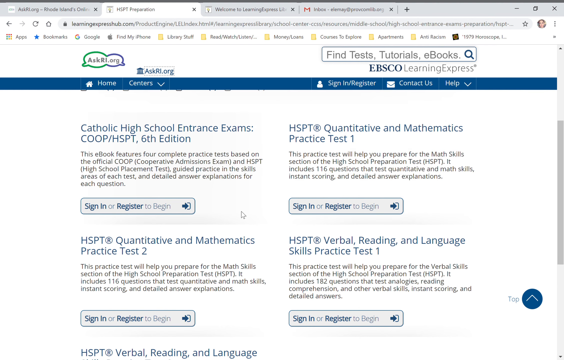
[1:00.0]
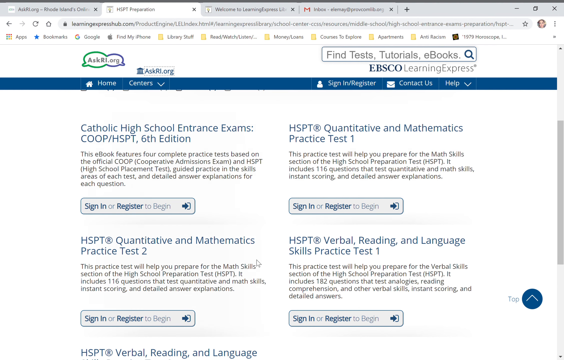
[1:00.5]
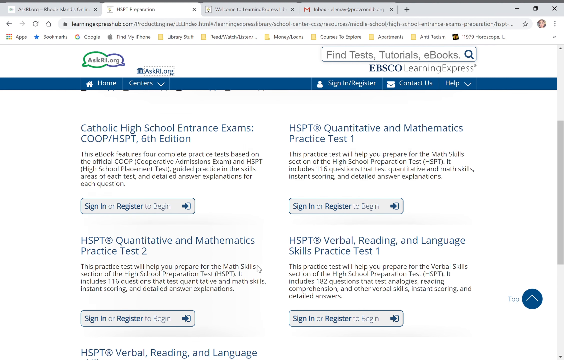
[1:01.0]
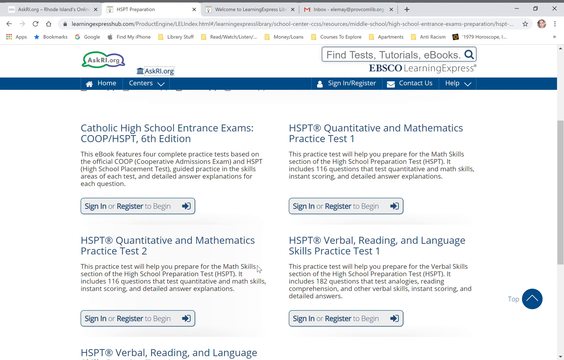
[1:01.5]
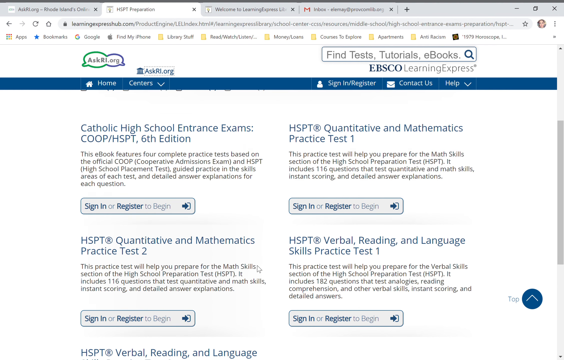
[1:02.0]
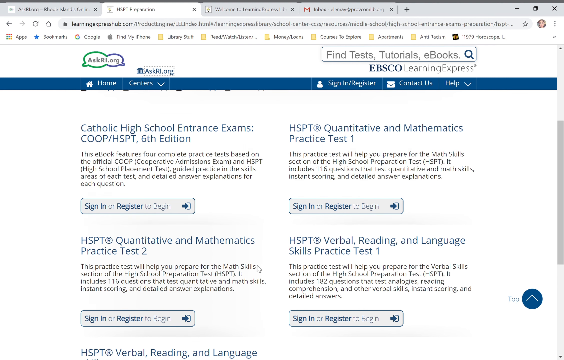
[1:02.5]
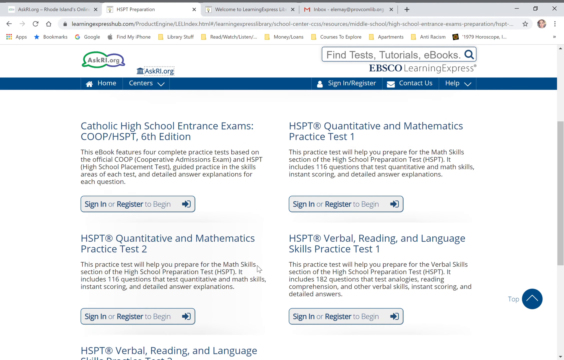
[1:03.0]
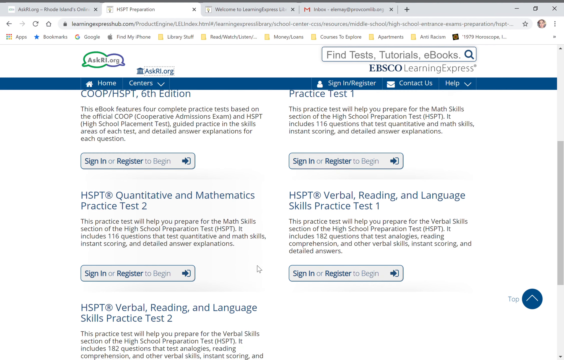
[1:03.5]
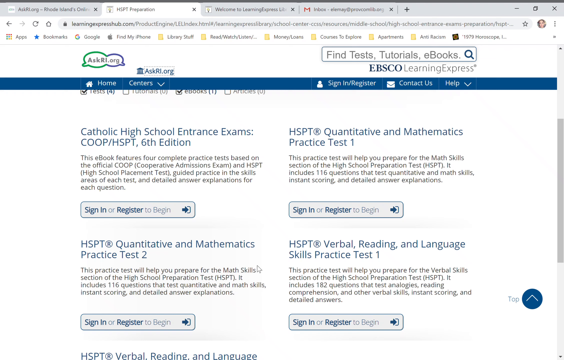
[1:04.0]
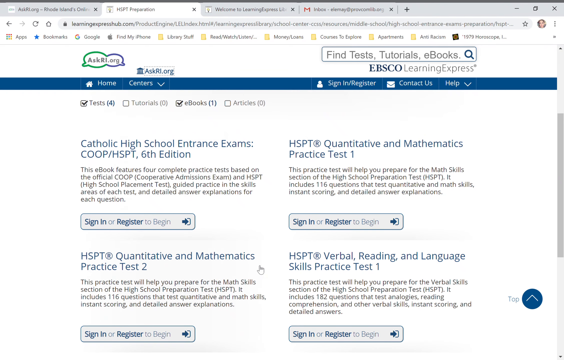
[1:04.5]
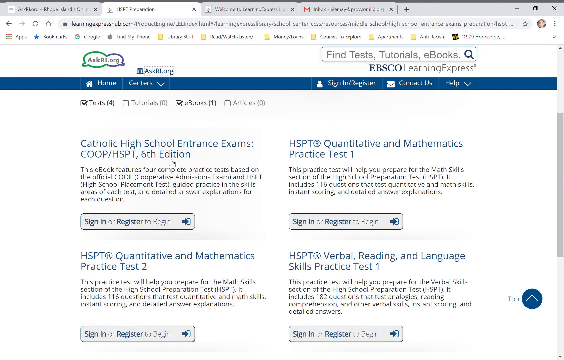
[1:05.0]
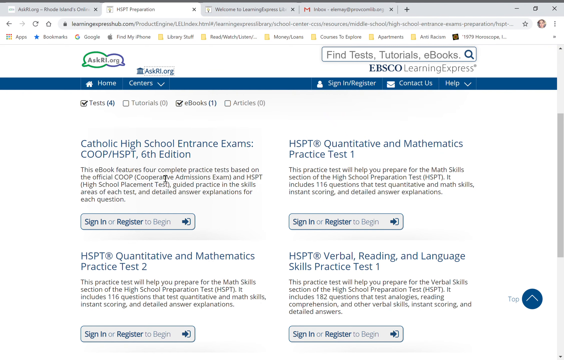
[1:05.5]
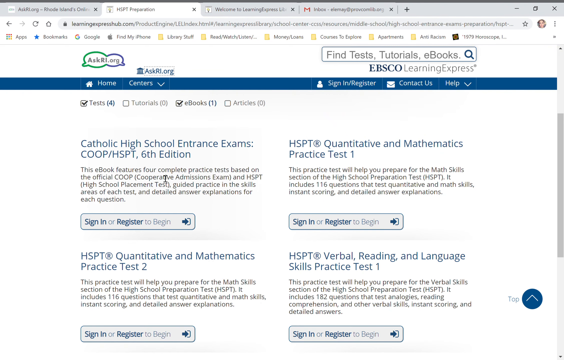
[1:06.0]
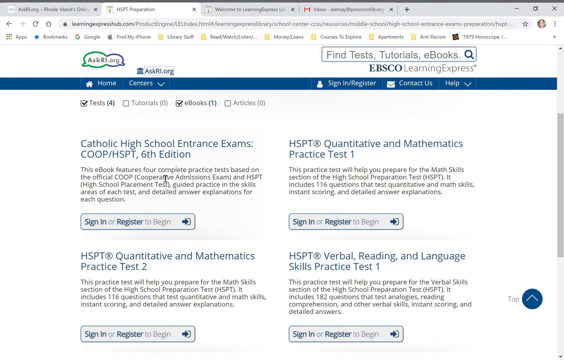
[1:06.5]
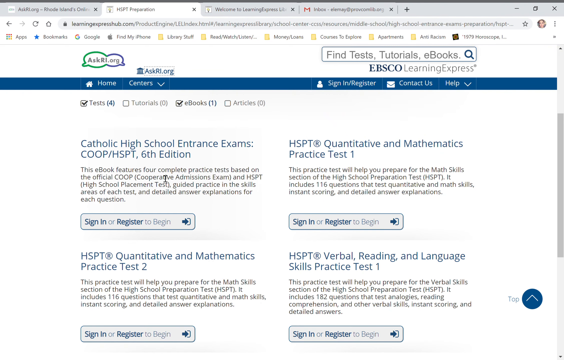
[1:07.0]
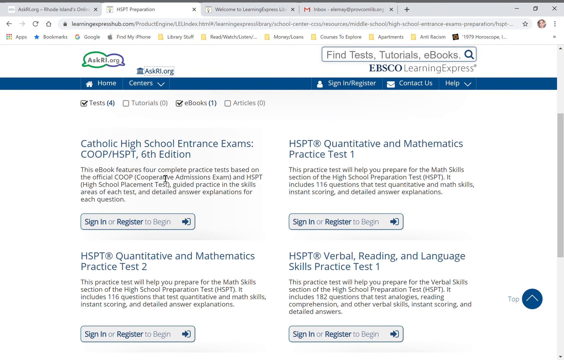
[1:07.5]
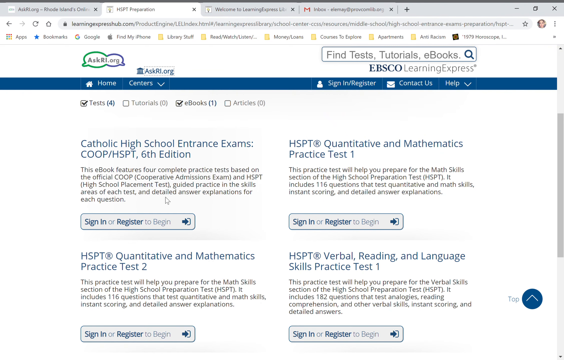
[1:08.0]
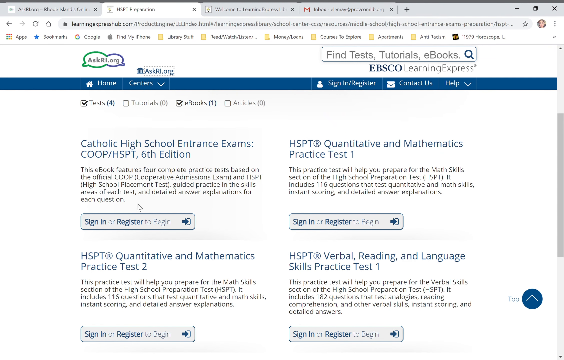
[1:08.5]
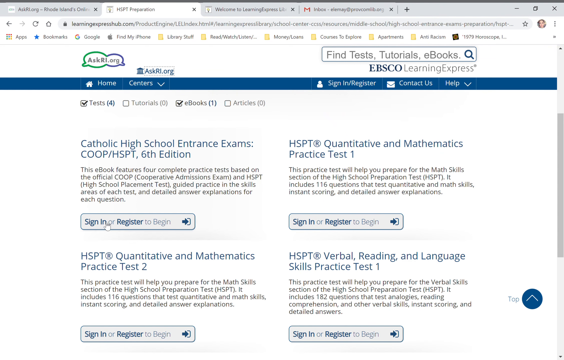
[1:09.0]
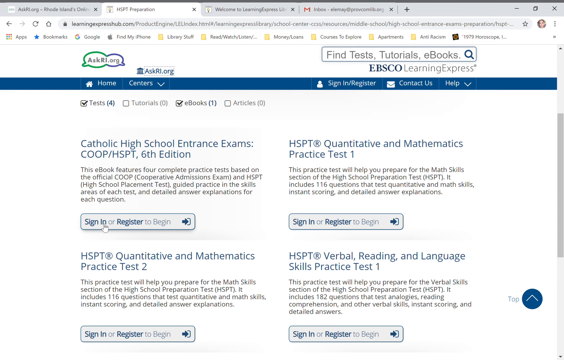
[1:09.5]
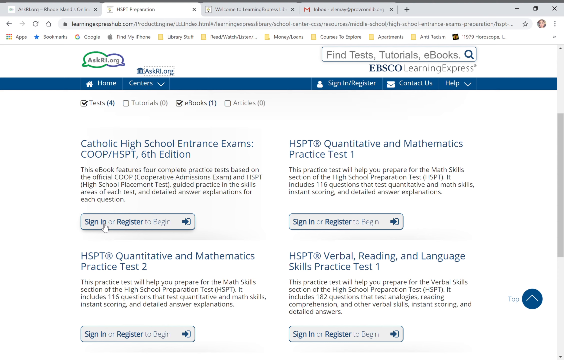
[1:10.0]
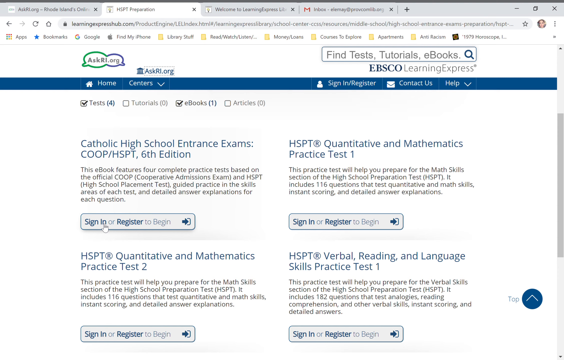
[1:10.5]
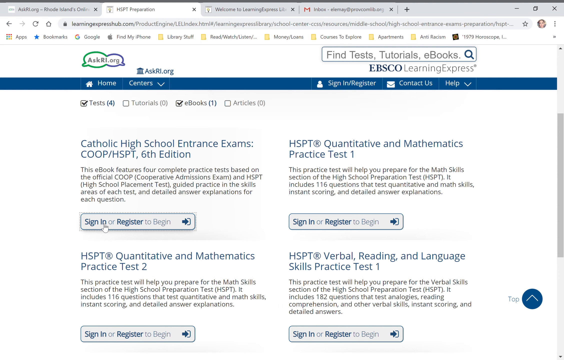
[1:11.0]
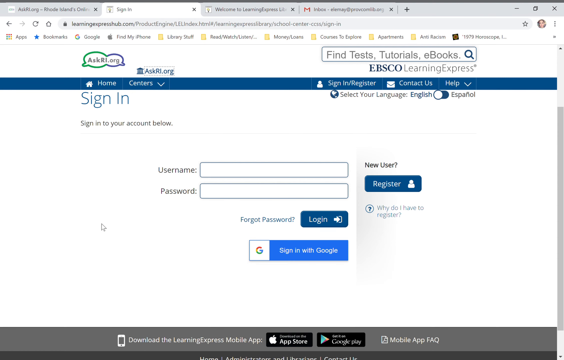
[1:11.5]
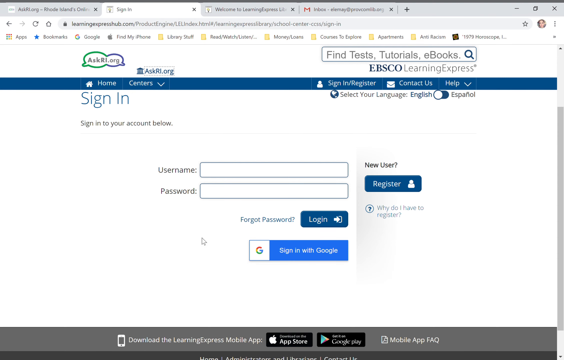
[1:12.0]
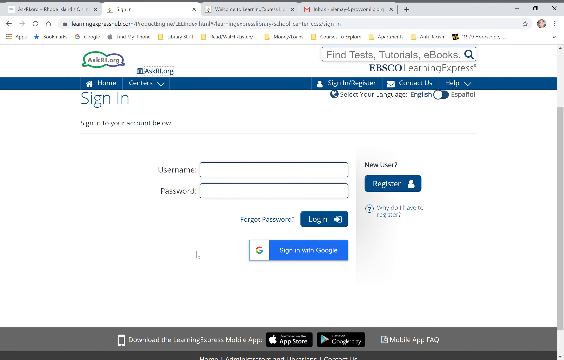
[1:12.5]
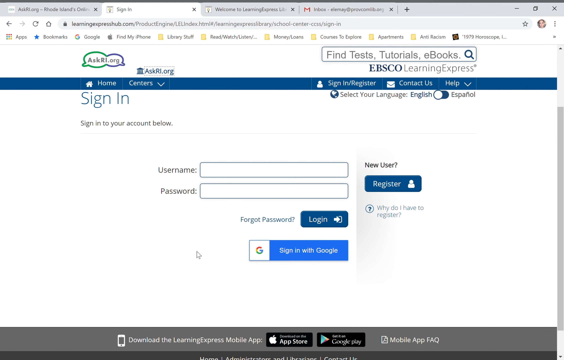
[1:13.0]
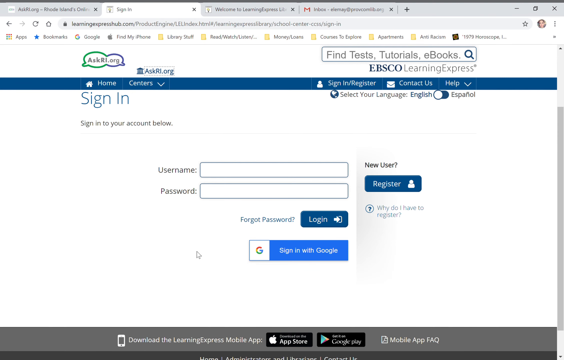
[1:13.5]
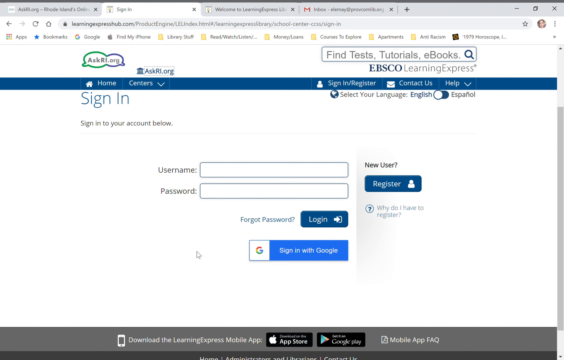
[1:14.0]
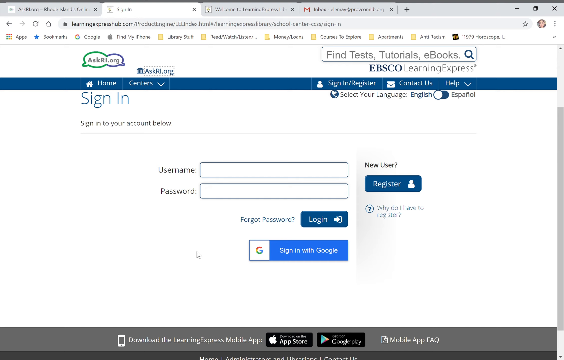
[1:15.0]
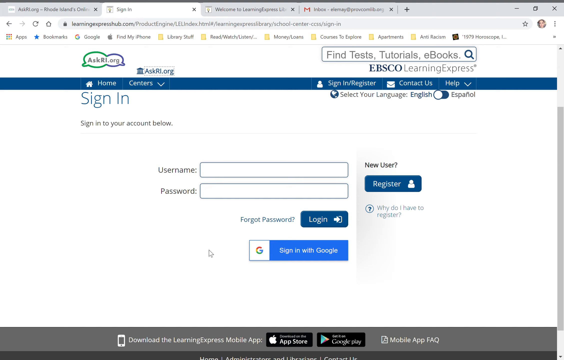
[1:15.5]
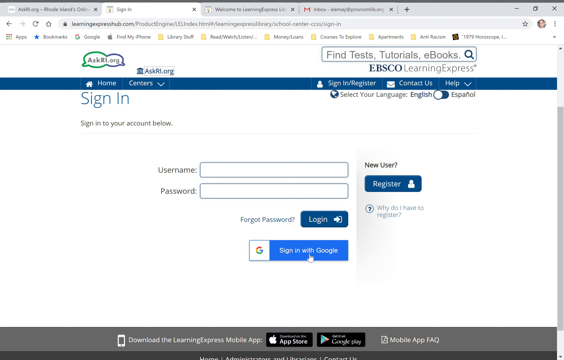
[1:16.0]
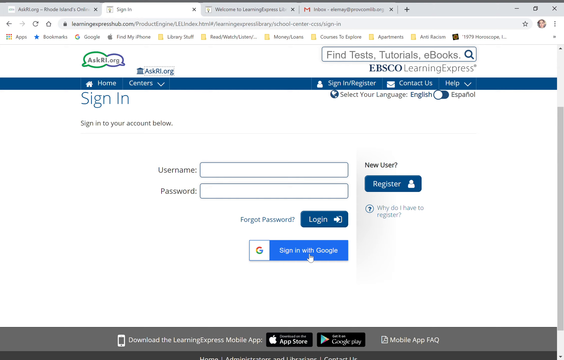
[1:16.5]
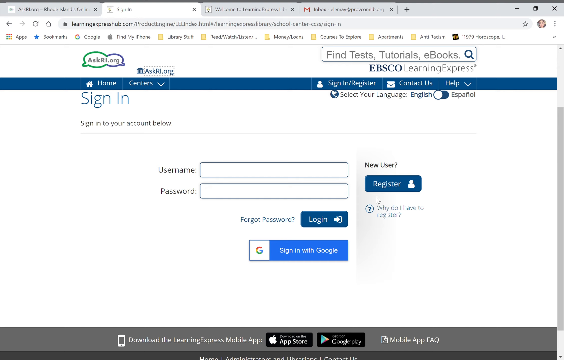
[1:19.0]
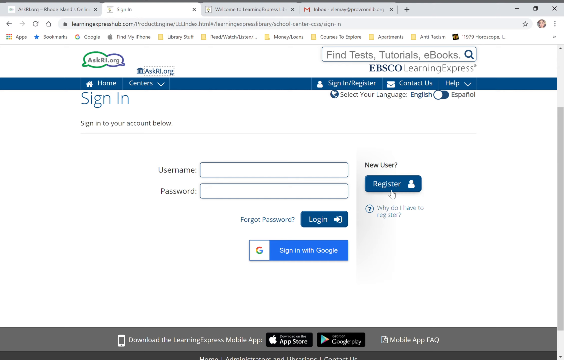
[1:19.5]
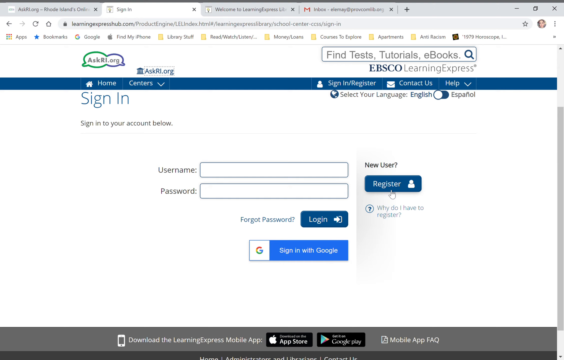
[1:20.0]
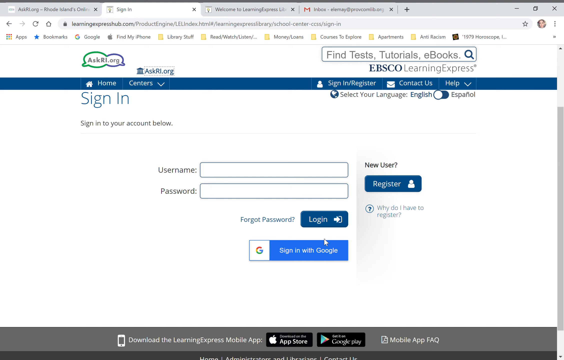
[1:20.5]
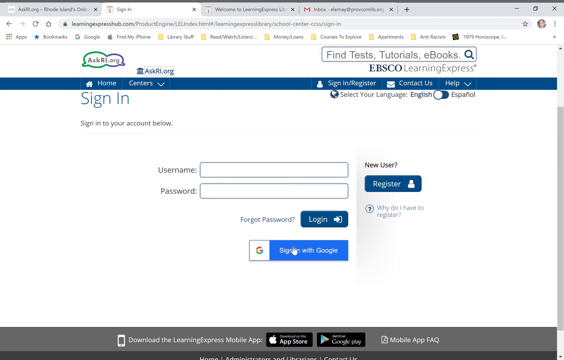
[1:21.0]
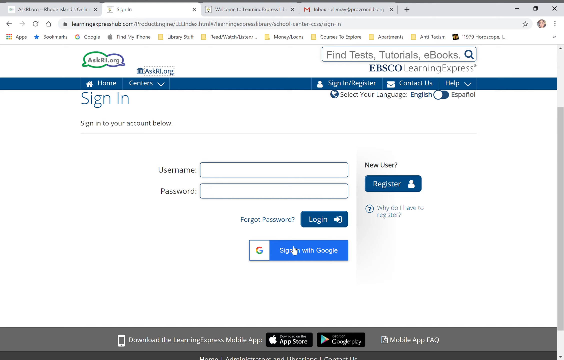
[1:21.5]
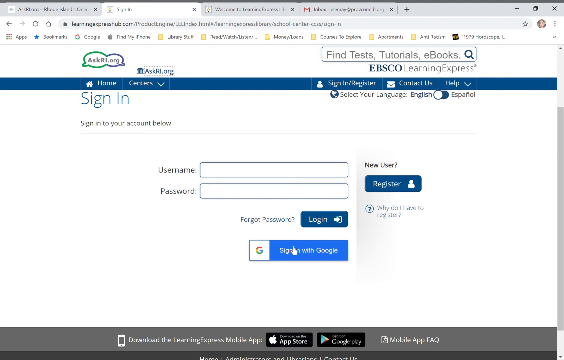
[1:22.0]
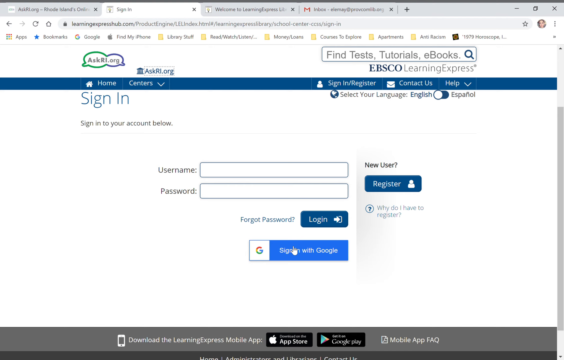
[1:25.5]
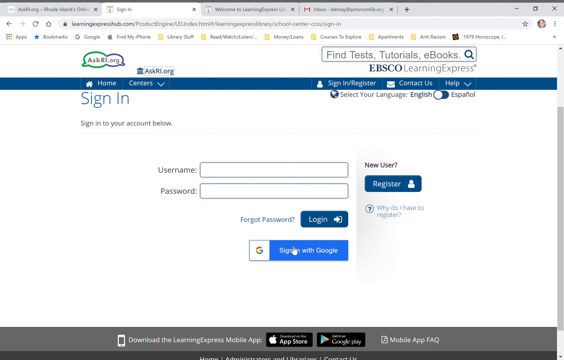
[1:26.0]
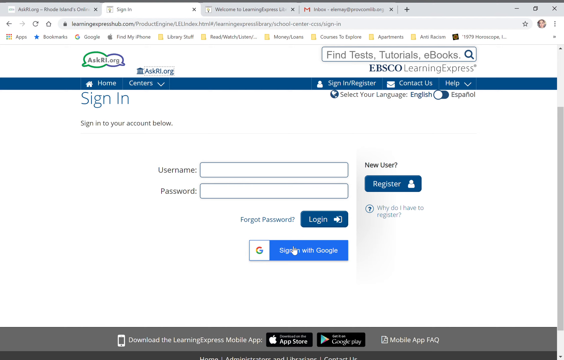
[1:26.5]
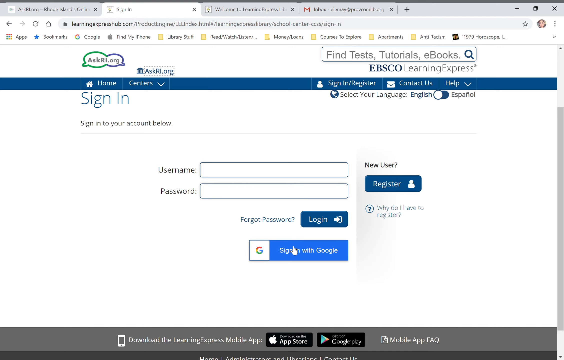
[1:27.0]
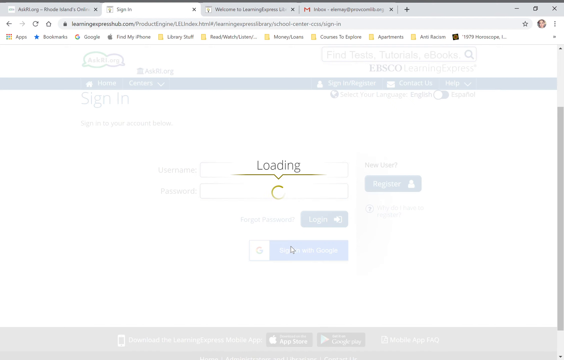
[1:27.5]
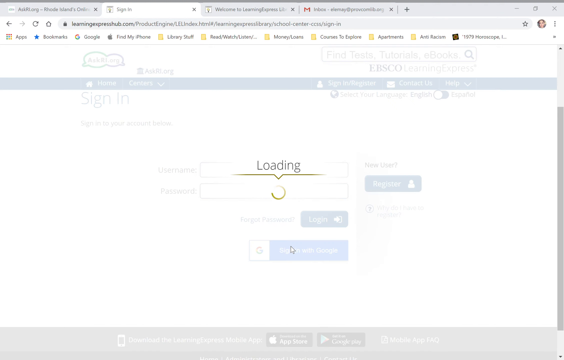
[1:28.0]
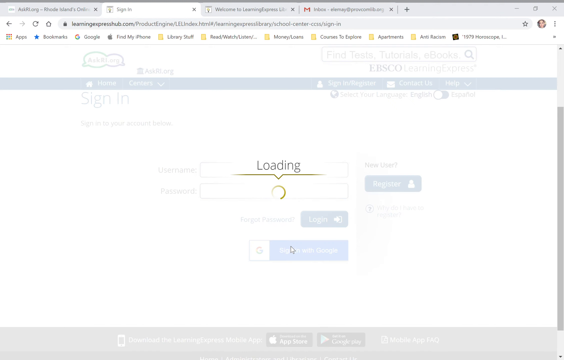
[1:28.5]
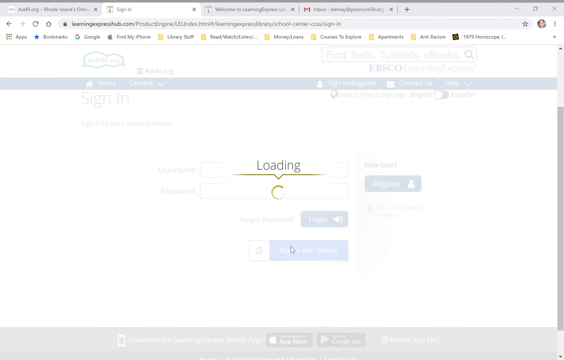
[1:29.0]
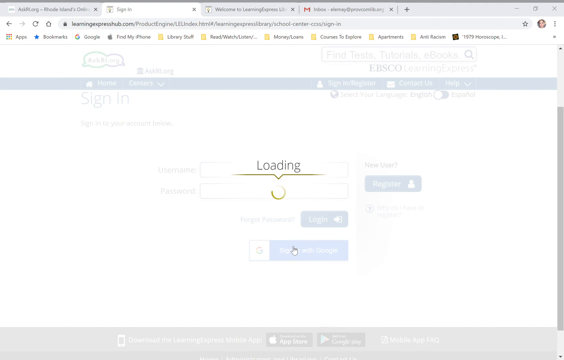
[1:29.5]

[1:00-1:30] On the high school entrance exam practice exams page, the cursor hovers over "Catholic high school entrance exams: Coop/HSPT, 6th Edition", which has some small writing underneath. The button below it, which says "sign in or register to begin", is clicked. A sign-in page appears requiring a username and password. Below the username and password area there is a forgot password link with a log-in button to its right, and "new user register". Below the forgot password and log-in button there is a sign-in with Google button; the cursor hovers over it and clicks it. A loading page appears with the same elements as before: the word "loading", a gold/yellow line, and a loading wheel.